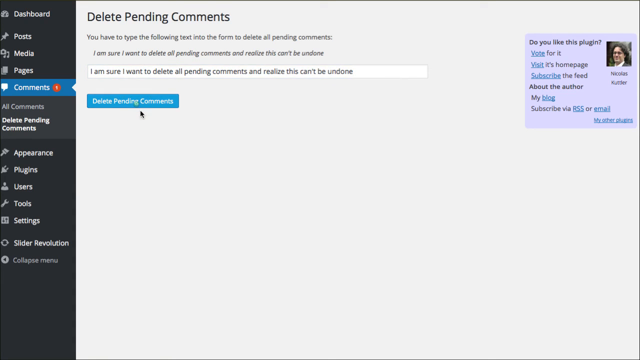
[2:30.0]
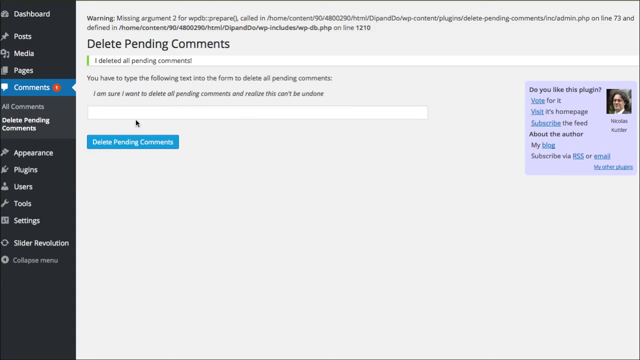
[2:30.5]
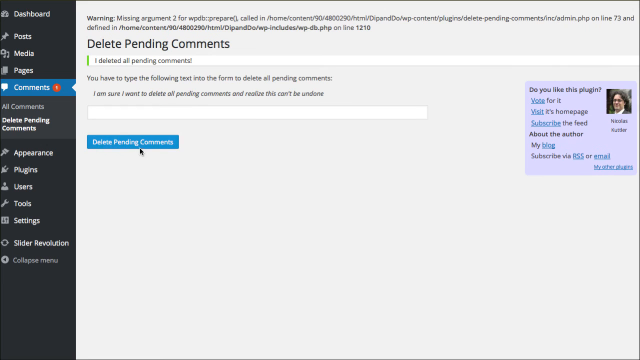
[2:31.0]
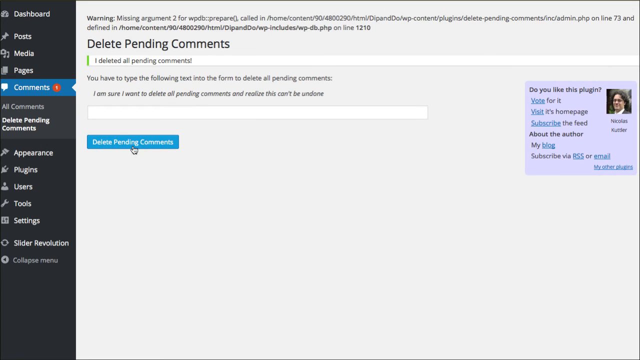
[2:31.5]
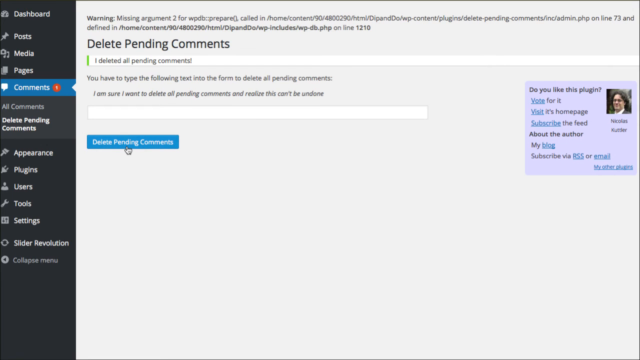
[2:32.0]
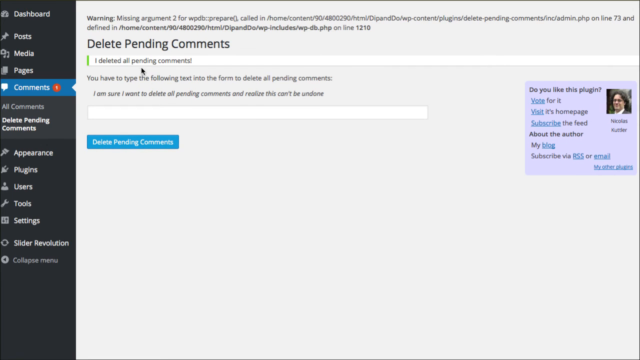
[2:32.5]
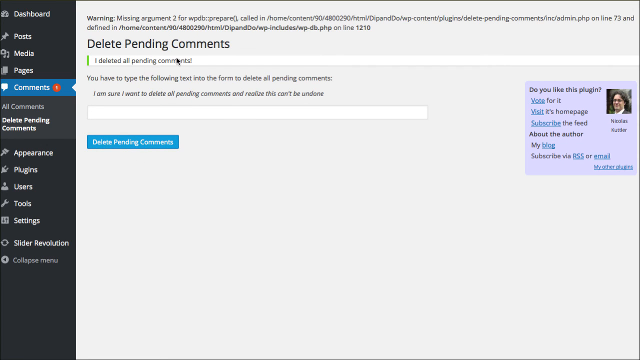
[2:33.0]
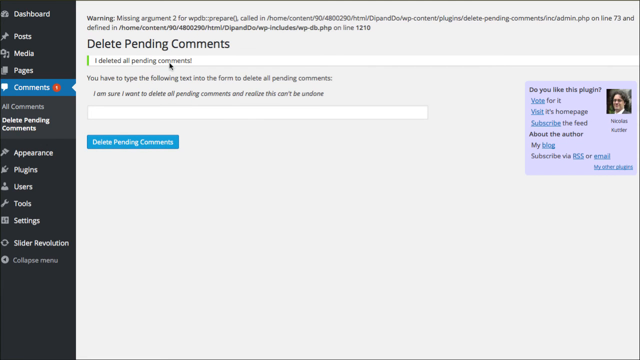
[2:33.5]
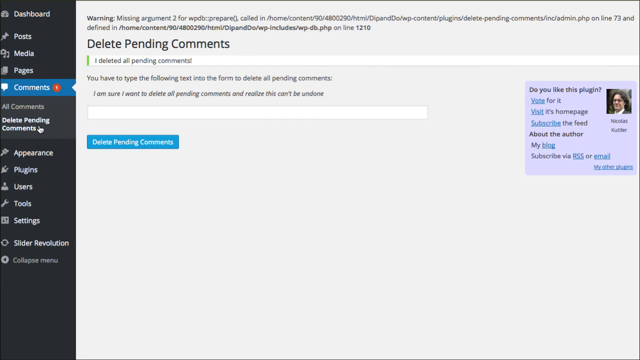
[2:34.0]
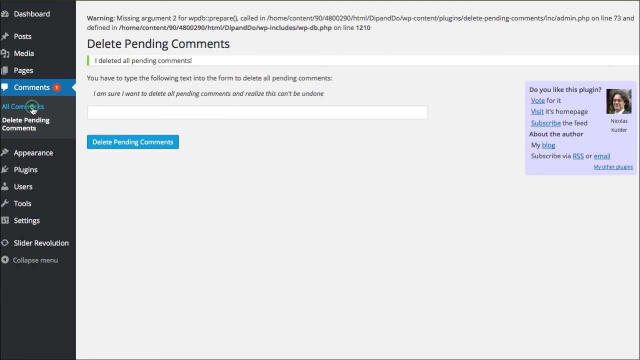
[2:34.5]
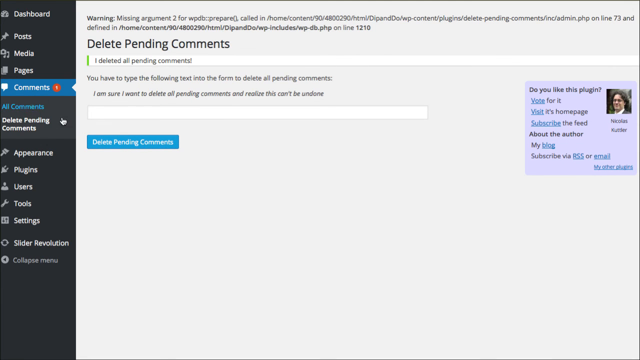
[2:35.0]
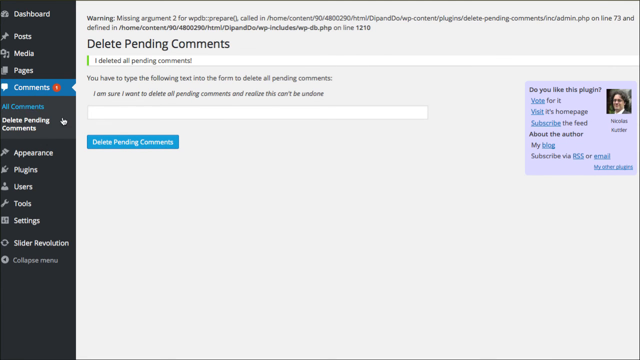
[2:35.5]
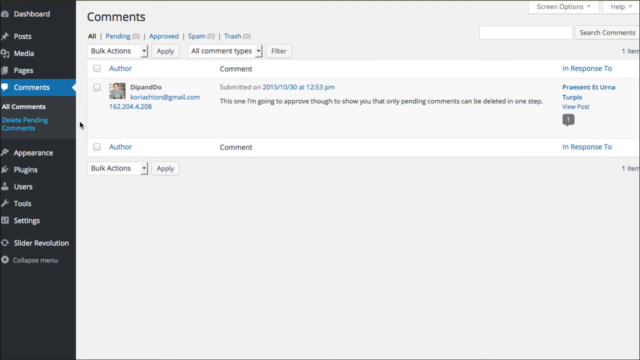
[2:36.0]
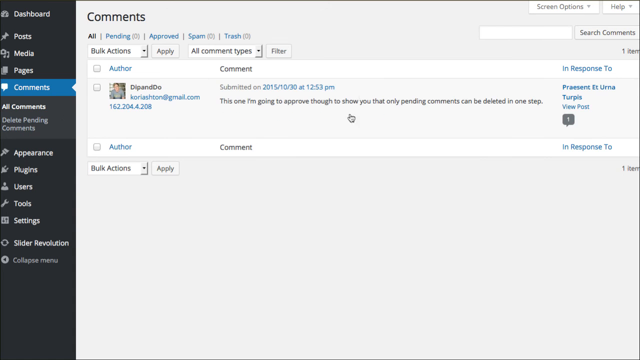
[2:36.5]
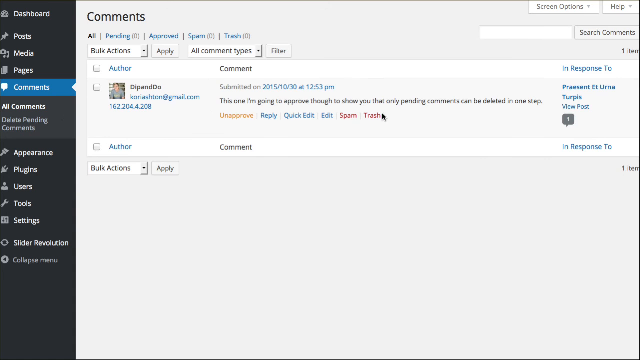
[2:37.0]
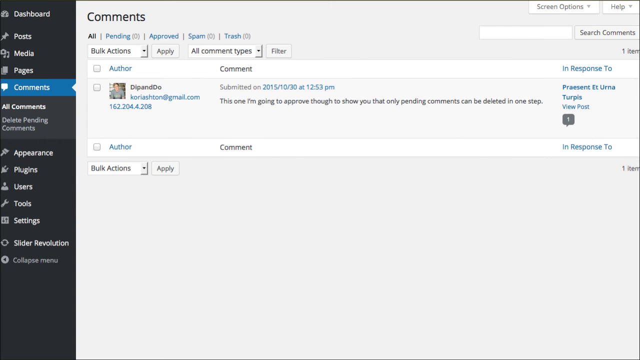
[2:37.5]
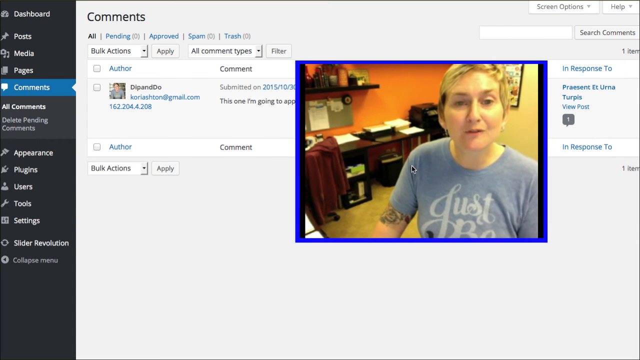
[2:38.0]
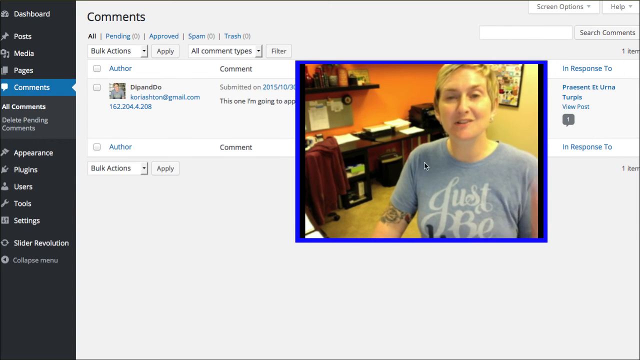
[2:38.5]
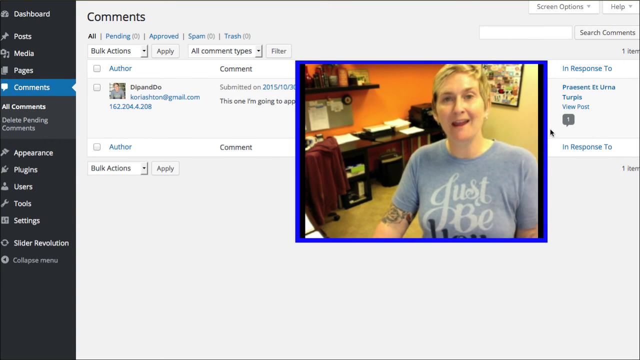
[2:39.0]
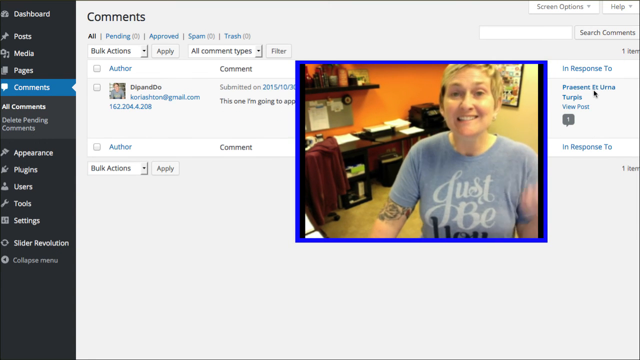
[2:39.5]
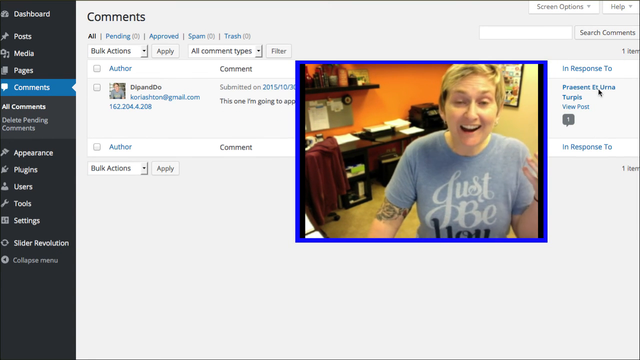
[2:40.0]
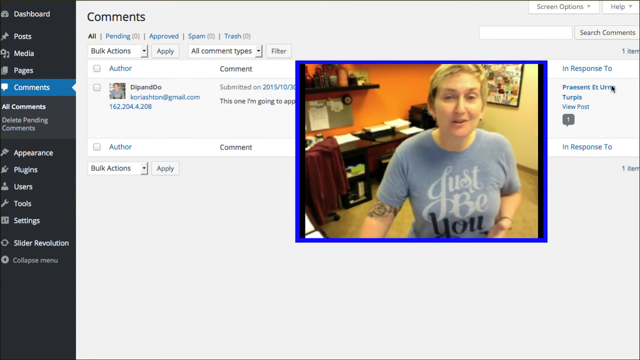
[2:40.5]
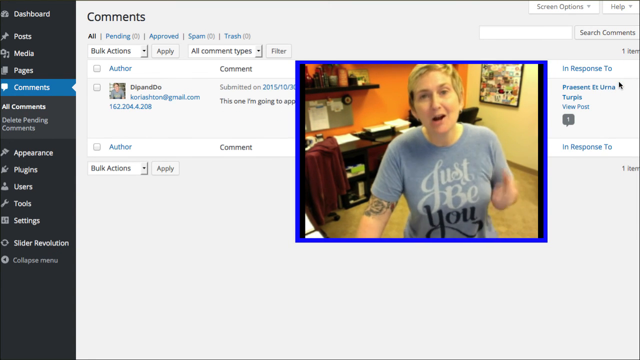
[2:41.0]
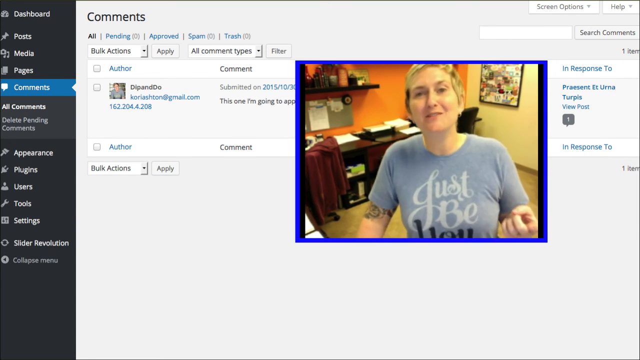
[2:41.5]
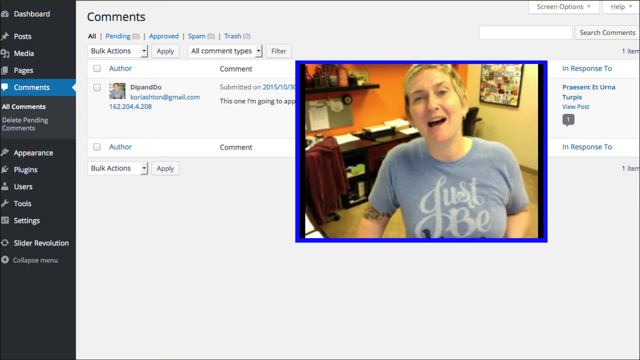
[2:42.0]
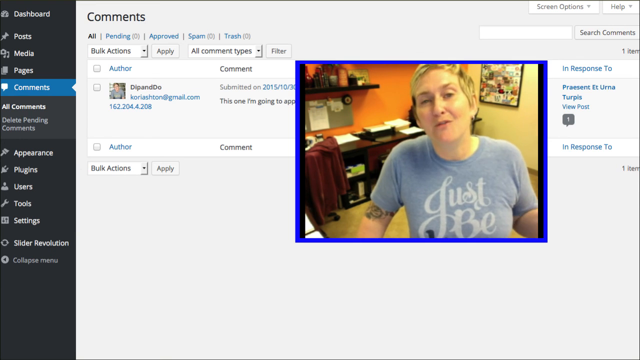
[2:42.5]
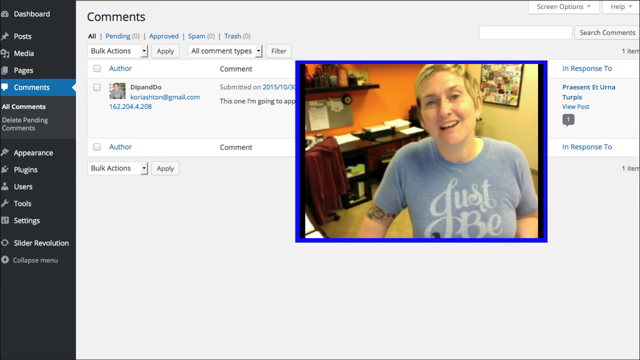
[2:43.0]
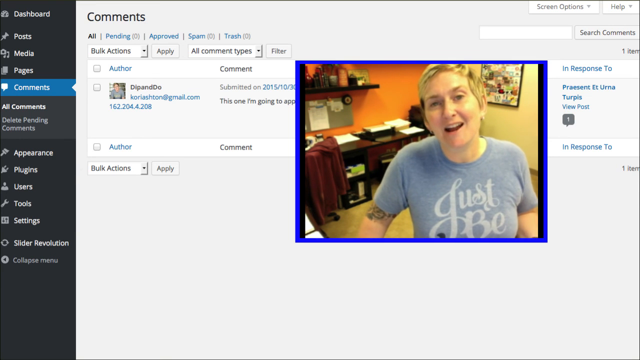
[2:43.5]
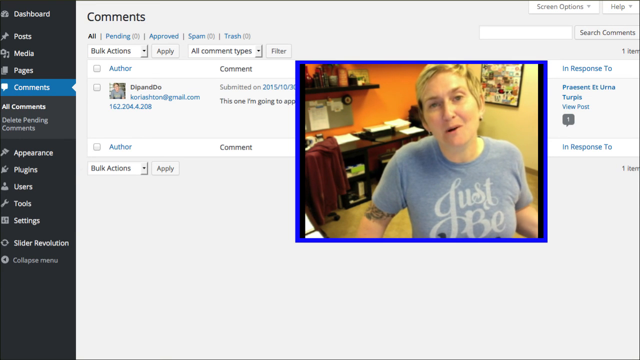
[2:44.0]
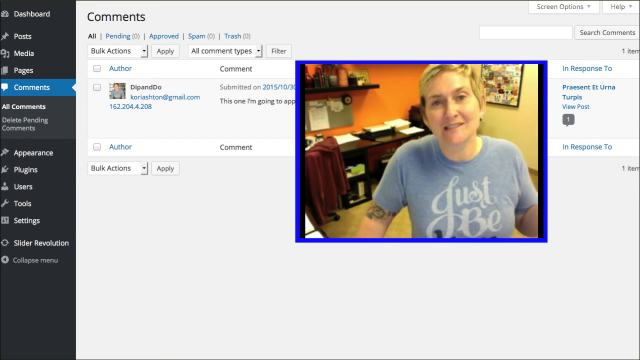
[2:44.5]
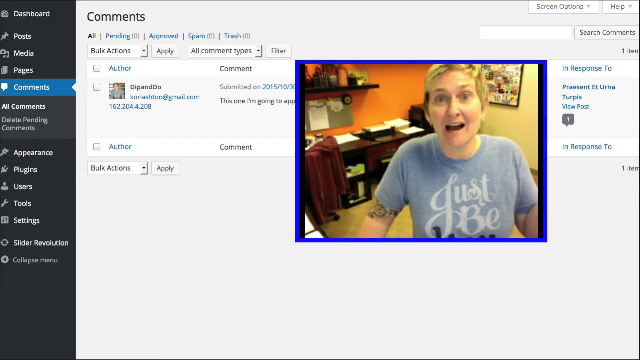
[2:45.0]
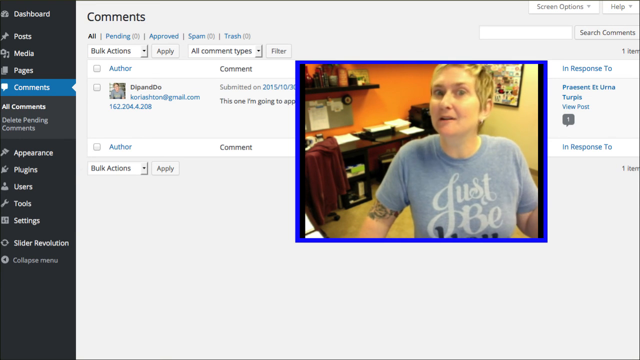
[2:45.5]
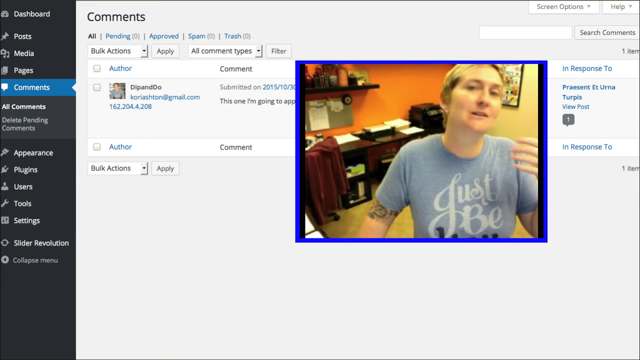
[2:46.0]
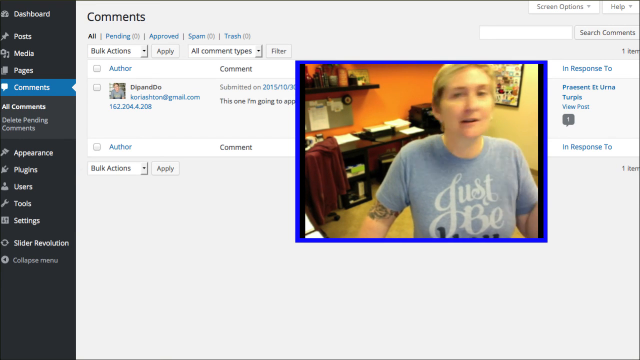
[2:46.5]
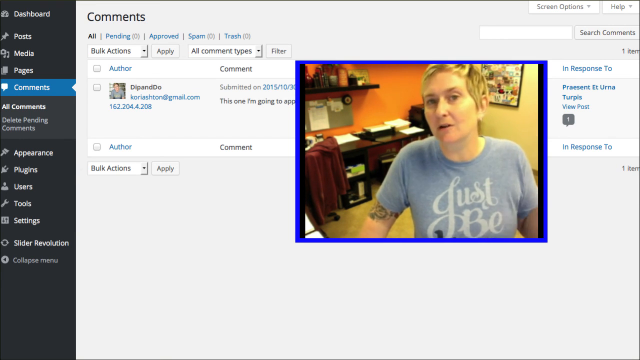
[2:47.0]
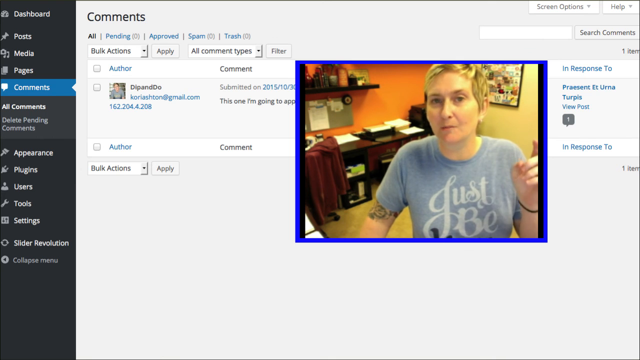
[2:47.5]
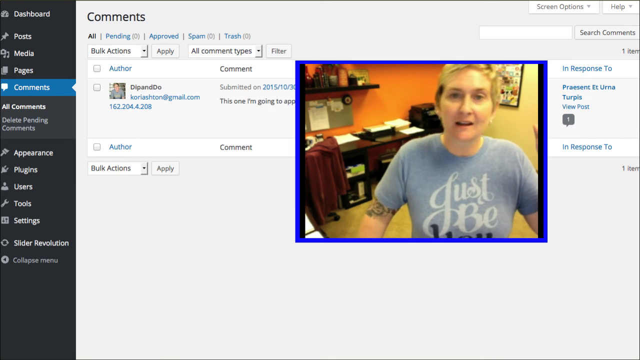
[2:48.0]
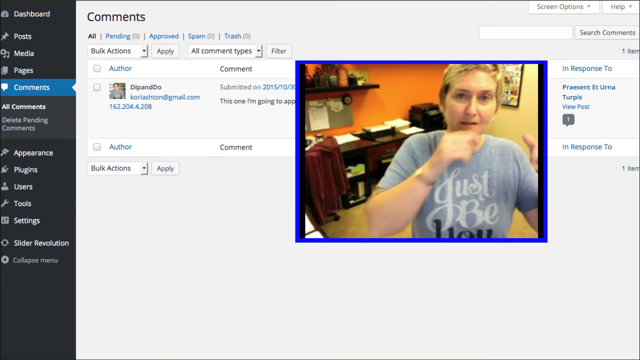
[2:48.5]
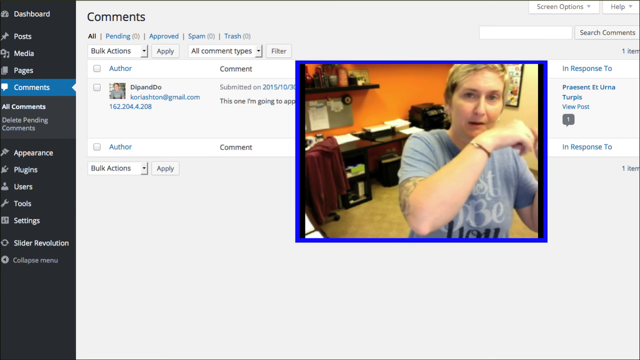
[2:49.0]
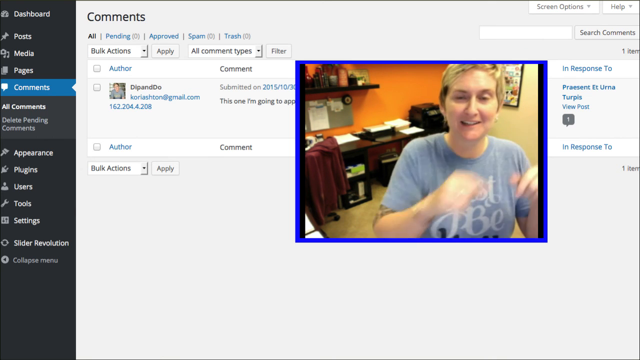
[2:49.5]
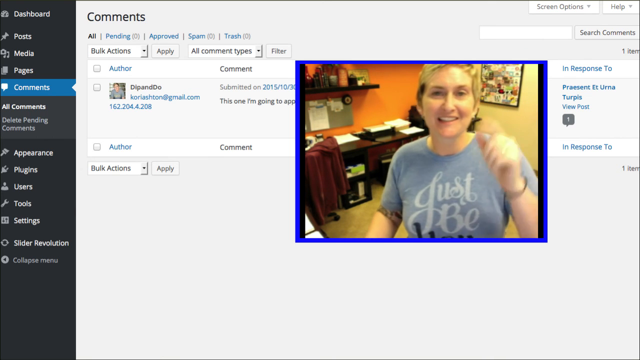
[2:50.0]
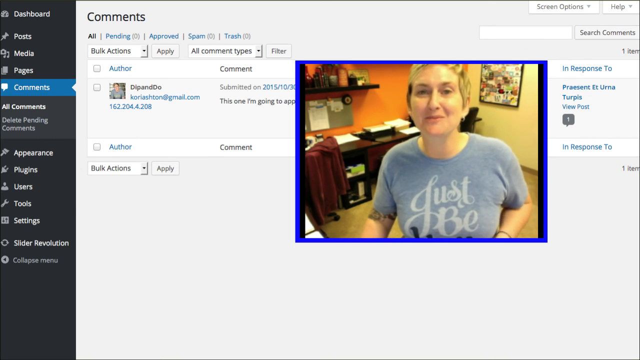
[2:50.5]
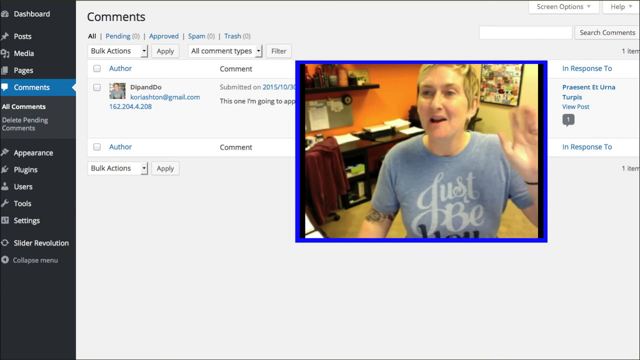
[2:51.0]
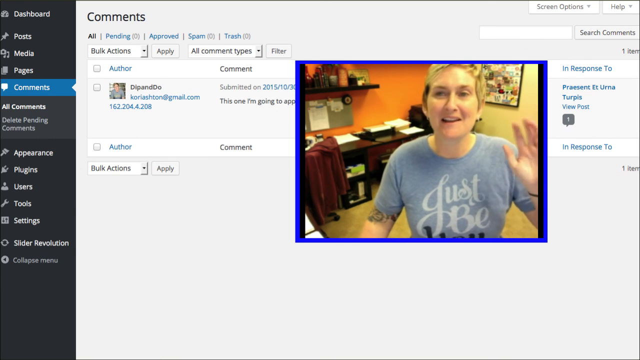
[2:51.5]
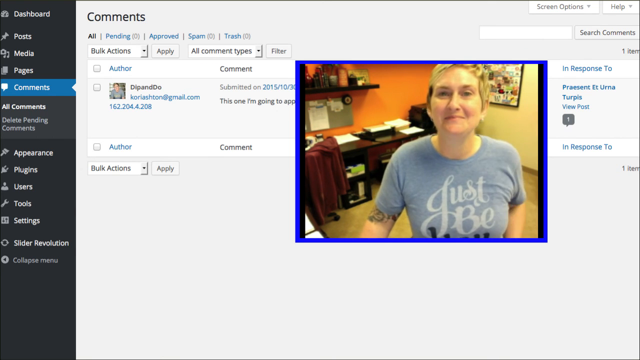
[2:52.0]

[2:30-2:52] A message pops up on the screen saying "I deleted all pending comments". The user clicks on all comments and then drags in a video from the left-hand side showing the woman talking to the camera. She moves her left hand up and down expressively, with her right hand resting on a table in front of her that is out of frame. She moves her right hand over and points it to her left off screen, lifts both hands, then puts her left hand back down. After putting her right hand back down on the table, she waves to the camera with her left hand. On the deleting pending comments page, text reads "delete pending comments. I deleted all pending comments. You have to type the following text in the form, delete all pending comments. I am sure I want to delete all pending comments and realize this can't be undone." On the right-hand side there is also a purple section, a sort of review section for the plugin's maker, that says "do you like this plugin? Vote for it, visit its homepage, subscribe to feed", "about the author", "my blog" and "subscribe".